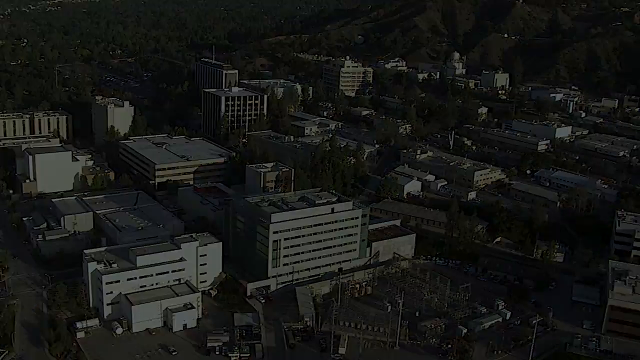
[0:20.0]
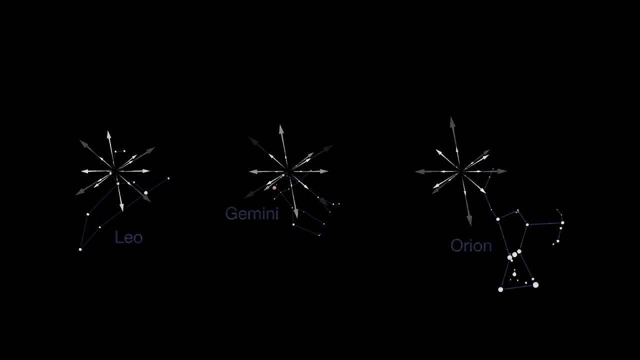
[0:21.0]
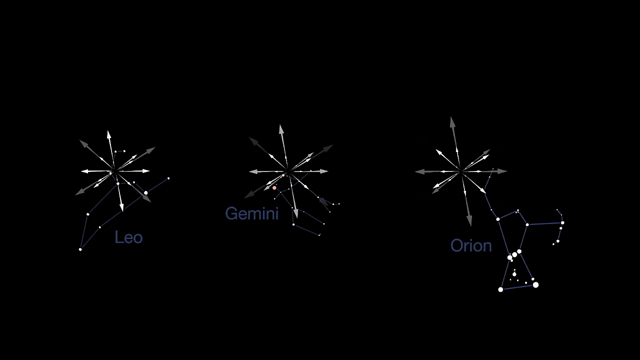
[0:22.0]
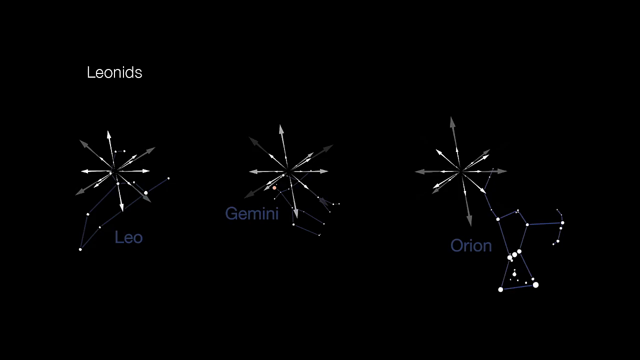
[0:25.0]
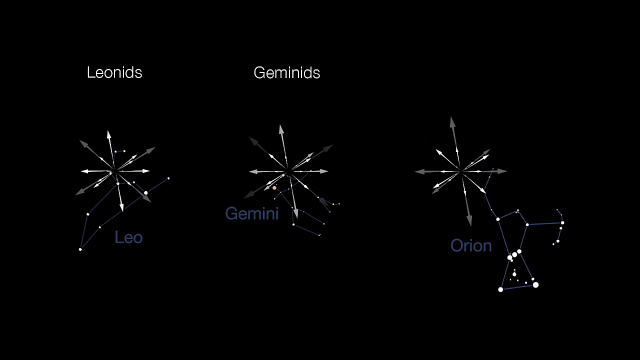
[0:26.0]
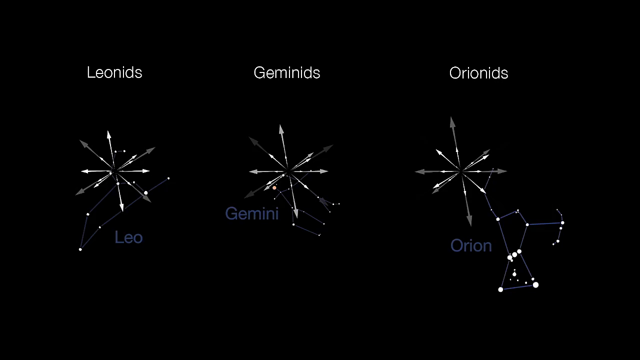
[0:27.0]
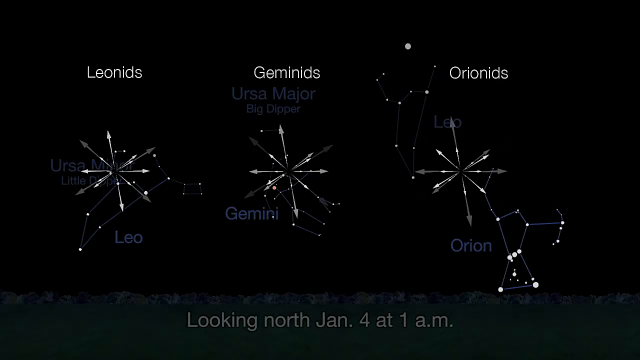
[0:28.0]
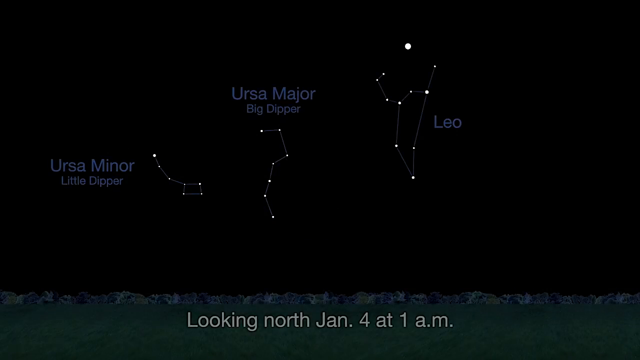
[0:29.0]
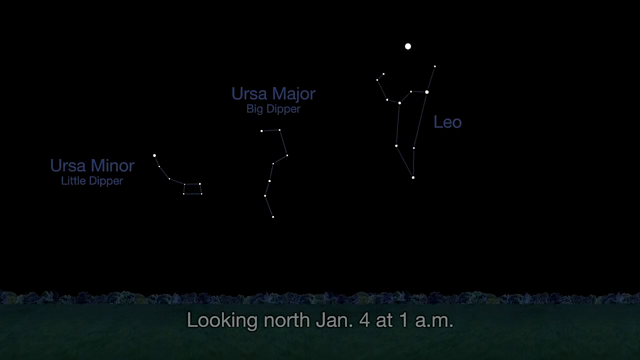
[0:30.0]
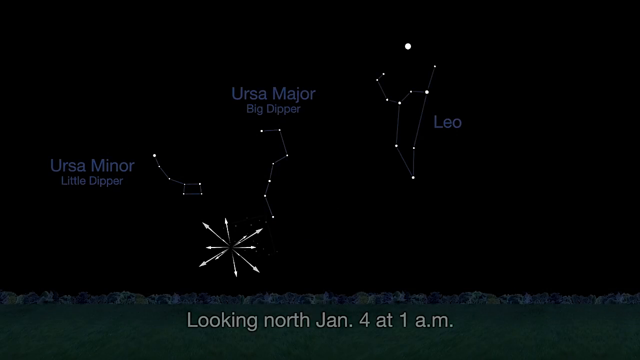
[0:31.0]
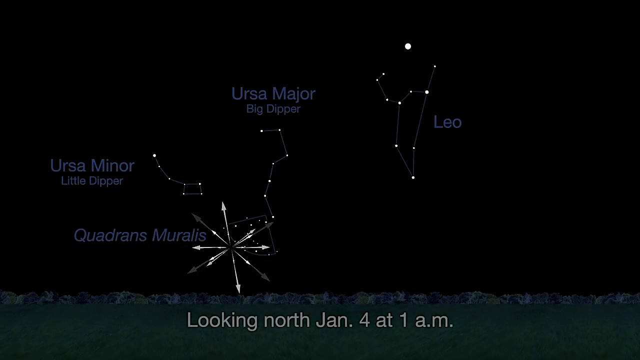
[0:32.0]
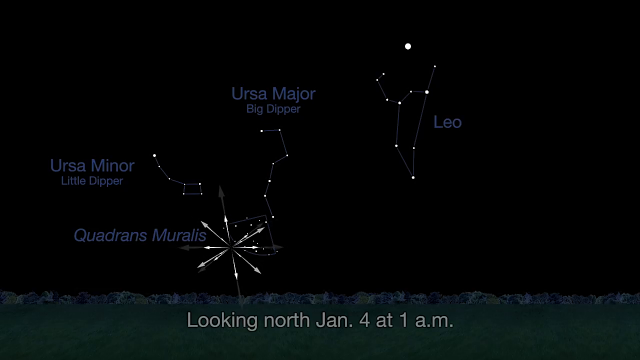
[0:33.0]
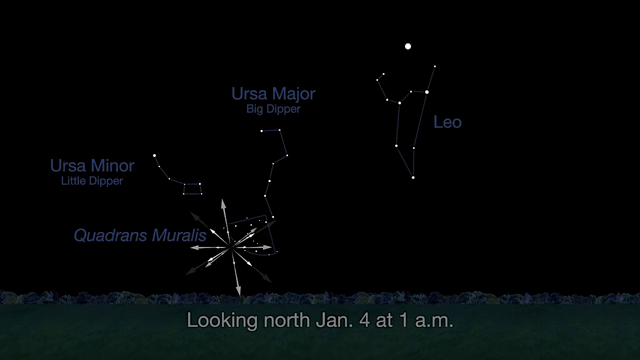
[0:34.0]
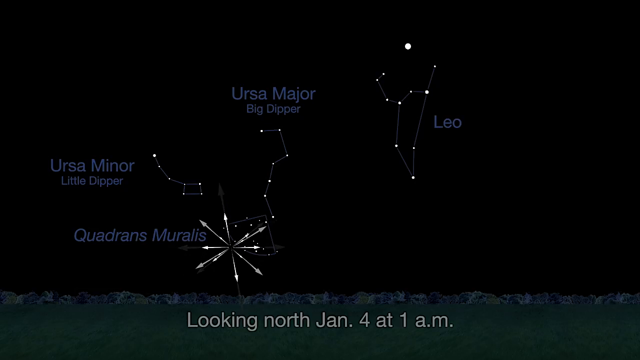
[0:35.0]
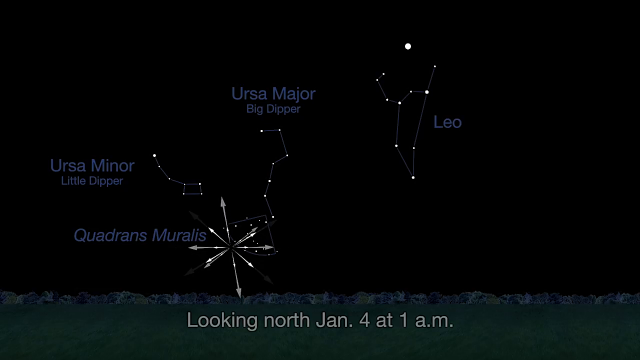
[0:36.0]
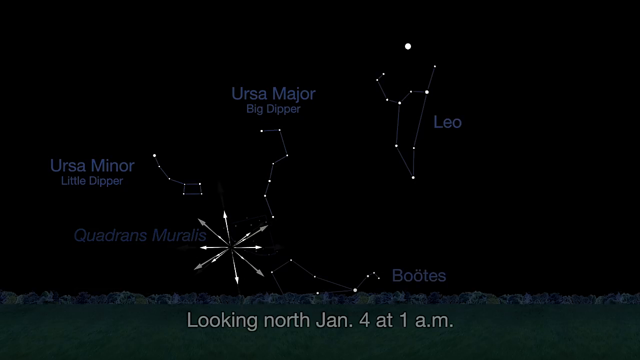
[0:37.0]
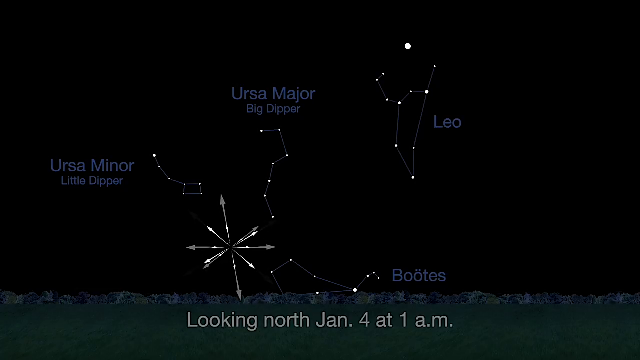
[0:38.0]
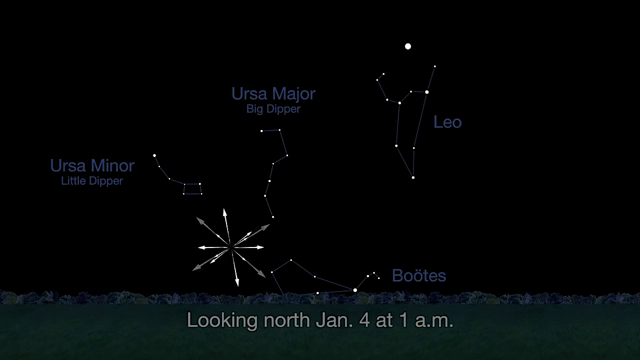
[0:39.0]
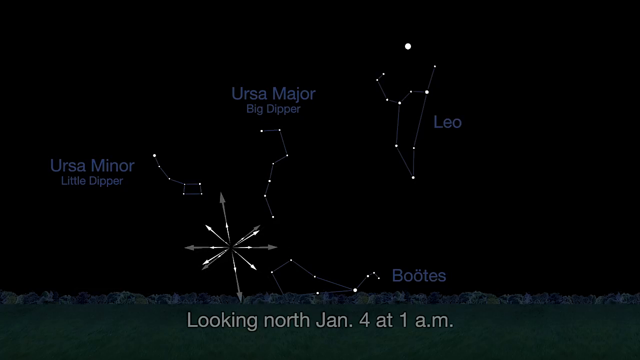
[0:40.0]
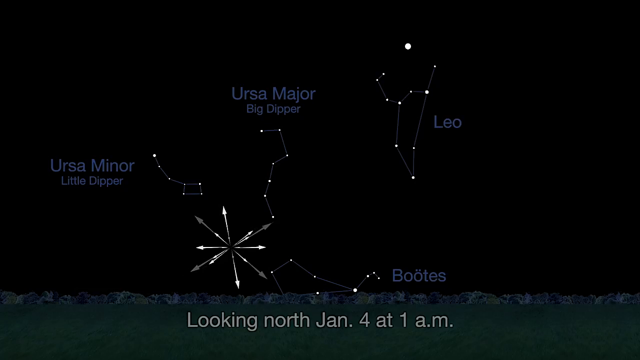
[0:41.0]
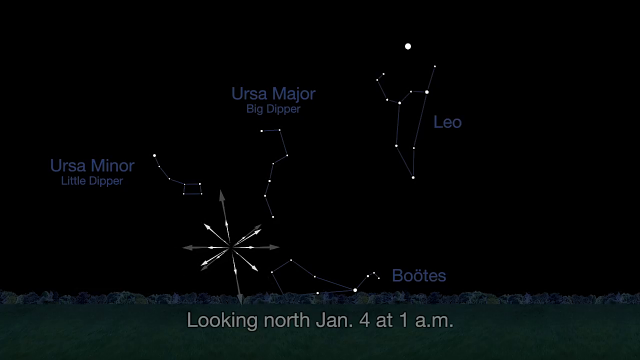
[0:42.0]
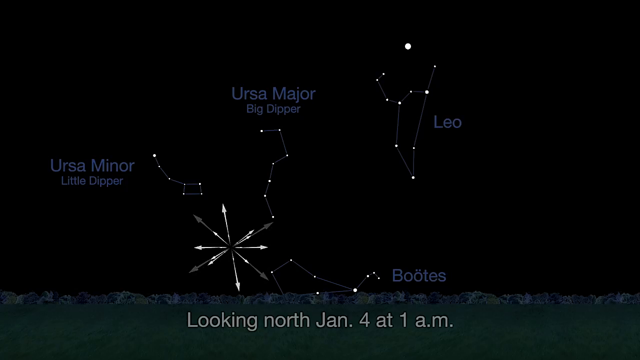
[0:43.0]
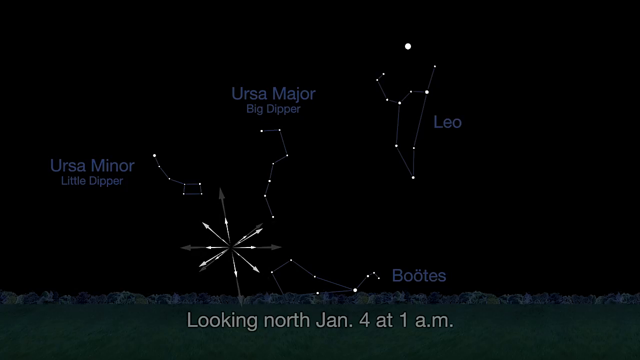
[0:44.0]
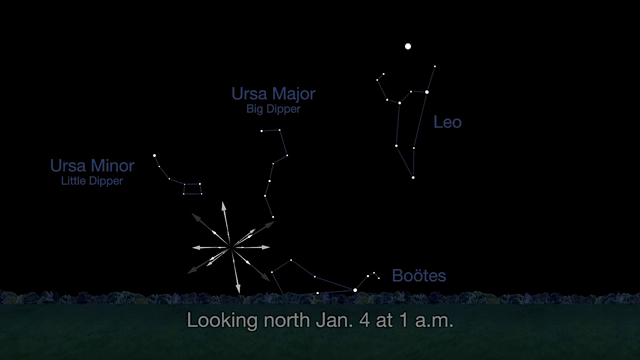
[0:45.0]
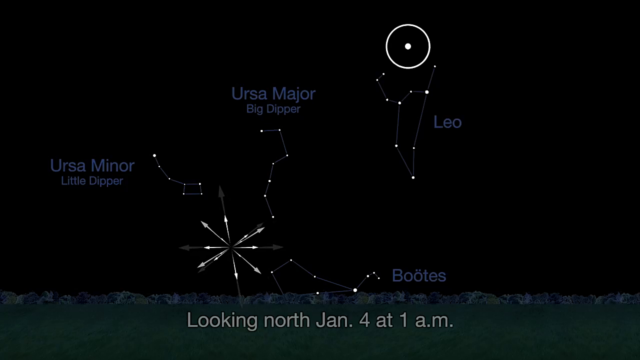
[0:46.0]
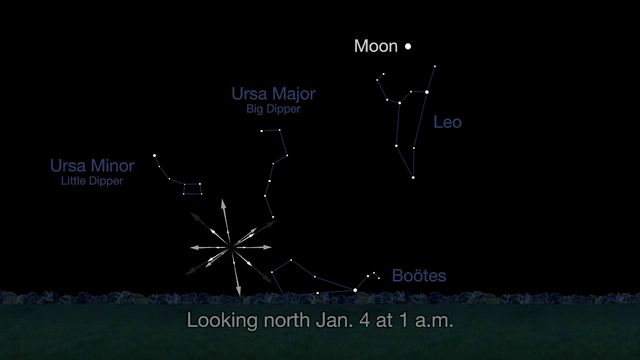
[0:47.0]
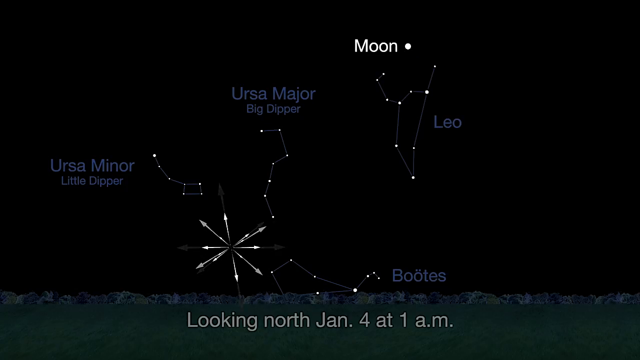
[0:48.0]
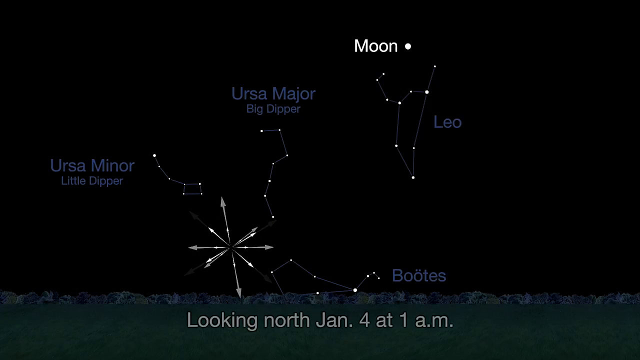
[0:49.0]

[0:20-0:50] The view looks down over a large office complex that looks like it is built in a valley of a city. The video then transitions to stars in the sky showing the constellations Leo, Gemini, and Orion, from left to right, each one labeled, with what look like starbursts in the sky around them. It also shows the names Leonidas, Geminids, and Orianides. The screen then transitions to more constellations: Ursa Minor, the Little Dipper; Ursa Major, the Big Dipper; and Leo, the Lion. The video shows different star patterns that can be seen from Earth.